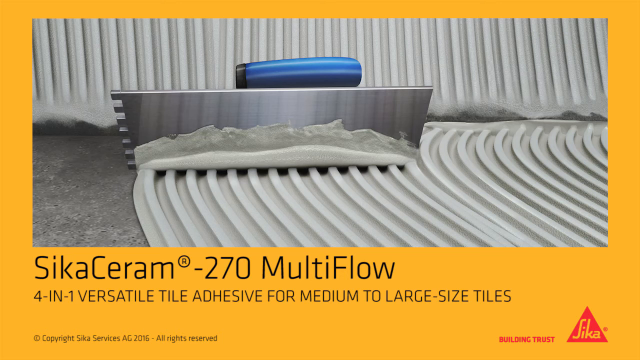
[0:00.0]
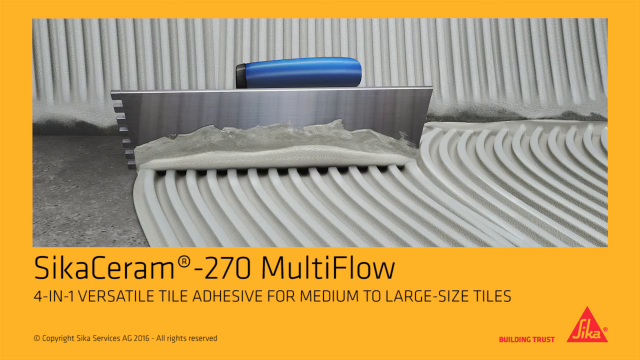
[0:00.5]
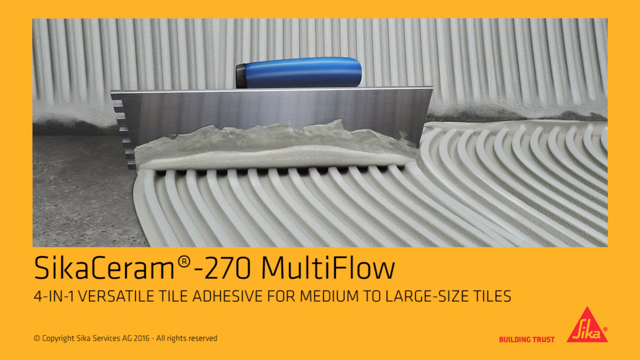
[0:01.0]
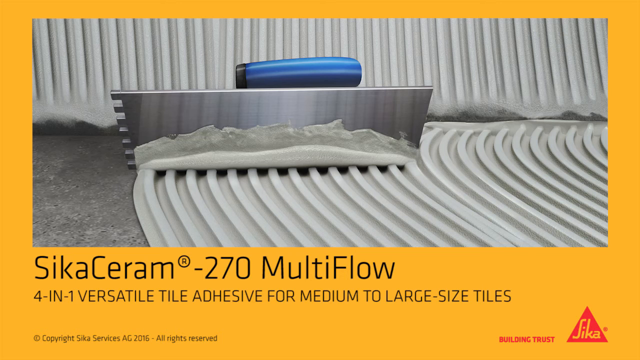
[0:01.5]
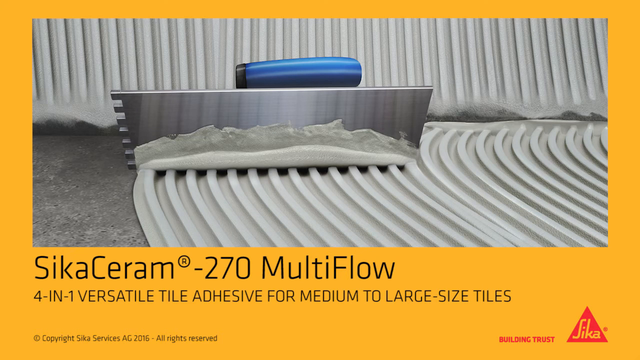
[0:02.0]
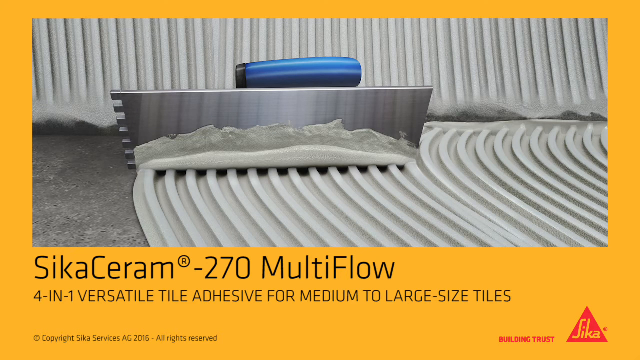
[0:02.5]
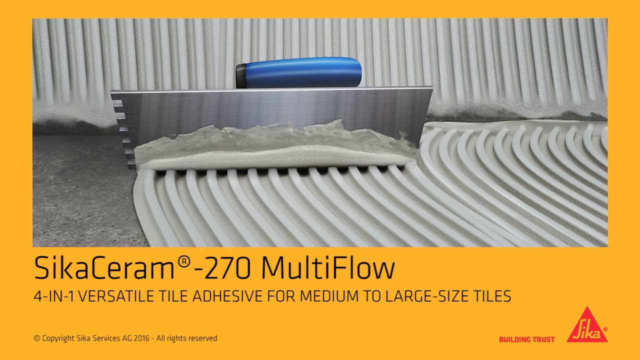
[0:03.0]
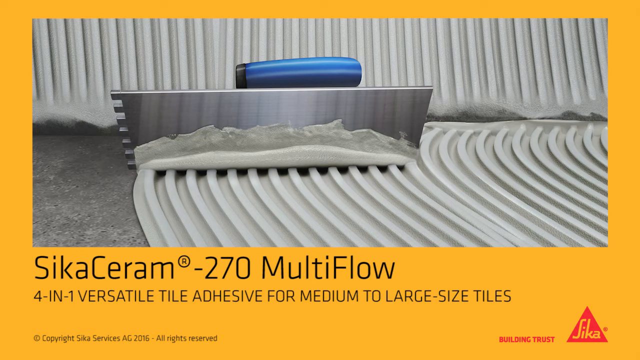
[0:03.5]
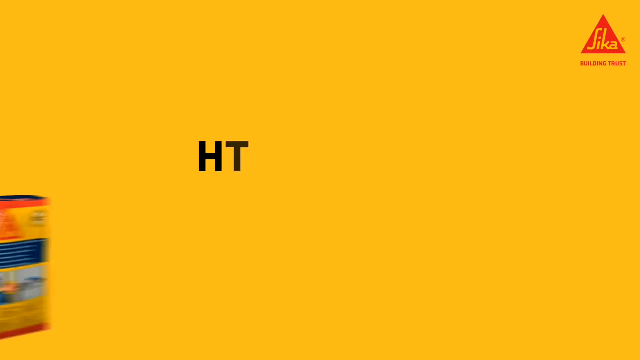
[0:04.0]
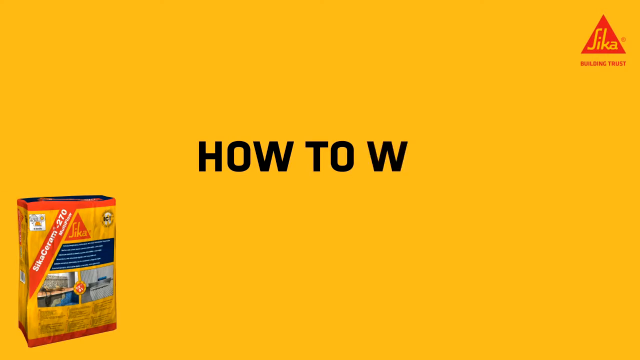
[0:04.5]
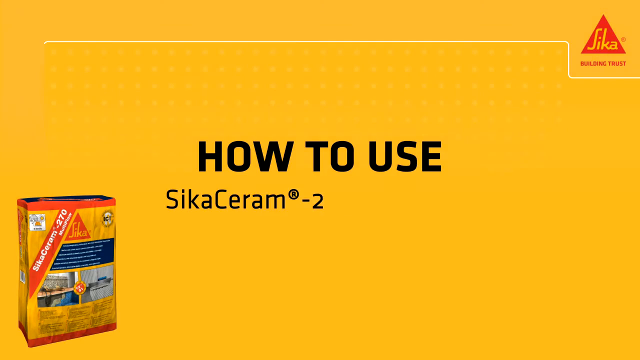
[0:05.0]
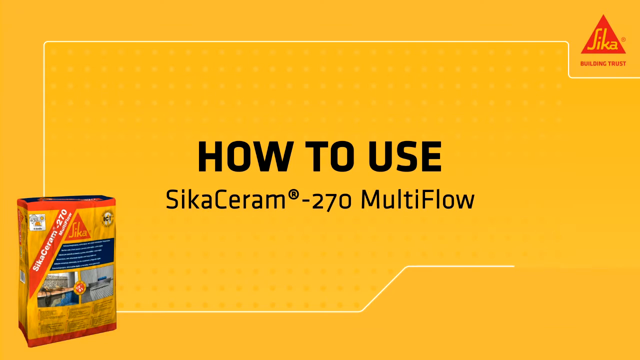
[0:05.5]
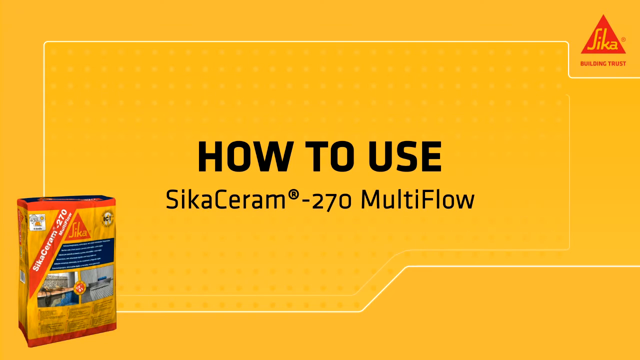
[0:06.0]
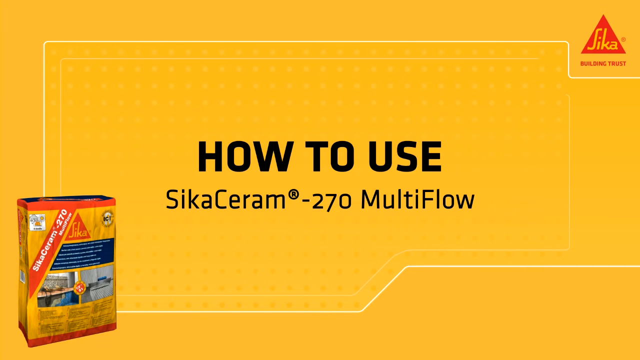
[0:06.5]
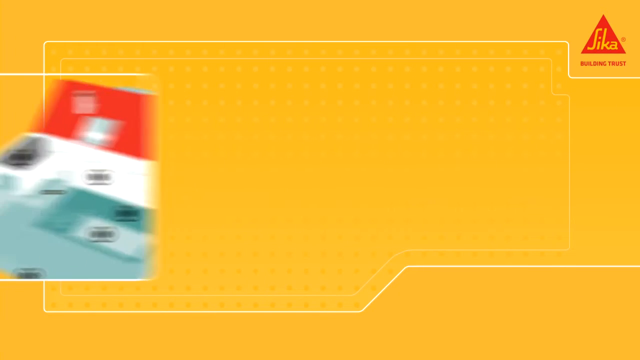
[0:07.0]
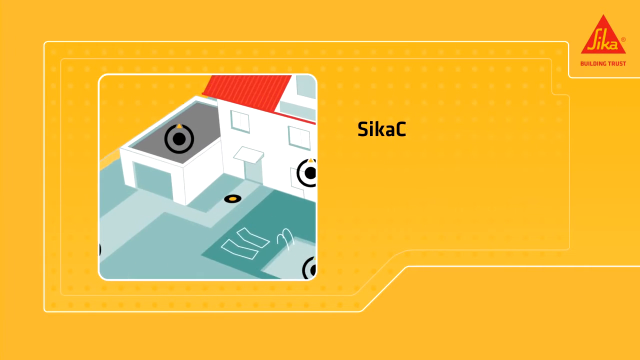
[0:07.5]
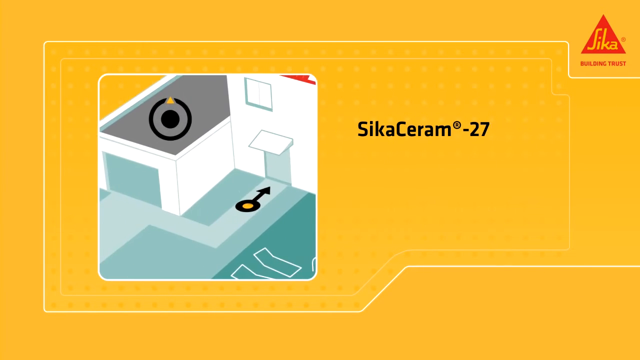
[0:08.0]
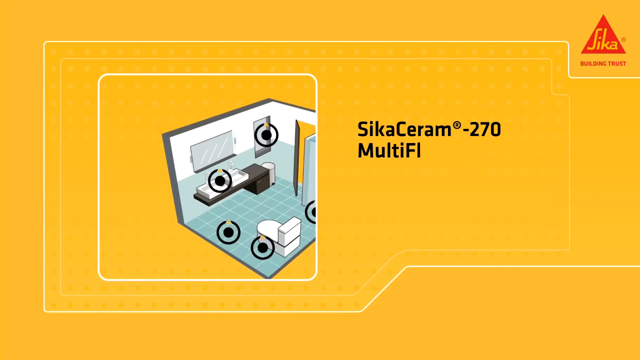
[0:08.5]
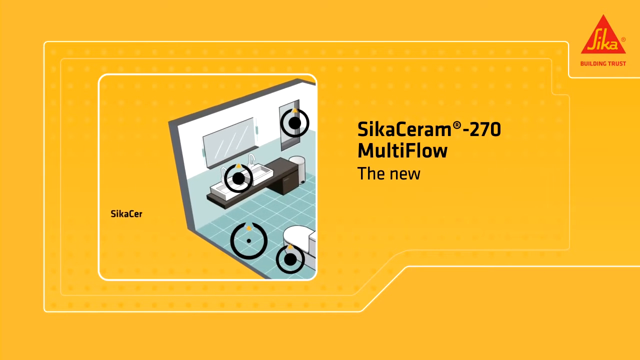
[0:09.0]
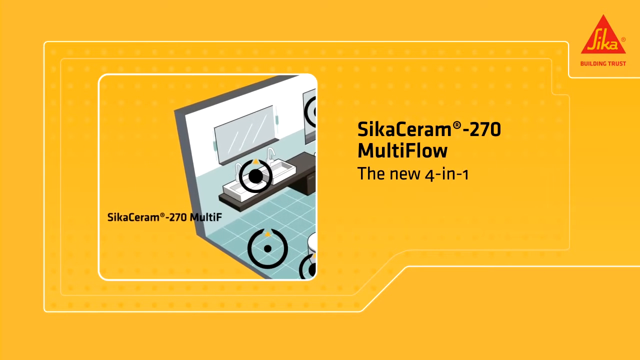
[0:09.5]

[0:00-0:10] The ad opens on a trowel for grout, shown with grout both on the floor and on the wall. The trowel is new and about a foot long, with a blue handle, and it appears to have about 14 fairly thick grooves. Text at the bottom of the screen names it: "SikaCeram 270 Multi-Flow" and "4-in-1 versatile tile adhesive for medium to large size tiles." An animation follows that says "how to use." In the lower left corner there is what is possibly a box that holds the trowel, the upper right corner reads "Sika Building Trust," and the center reads "how to use SikaCeram 270, multi-flow." That disappears and a diagram of a house appears, with an arrow and someone about to enter through the front door, which is next to the garage. Inside is a bathroom with a sink, a trash can and a toilet, and a shower off to the right. Five points in the diagram are marked with round circles, and the camera focuses in on the sink in the diagram.